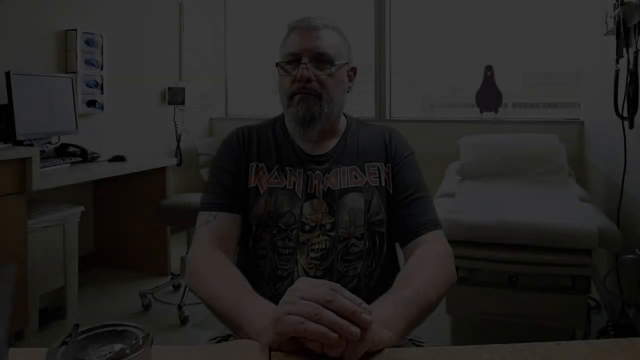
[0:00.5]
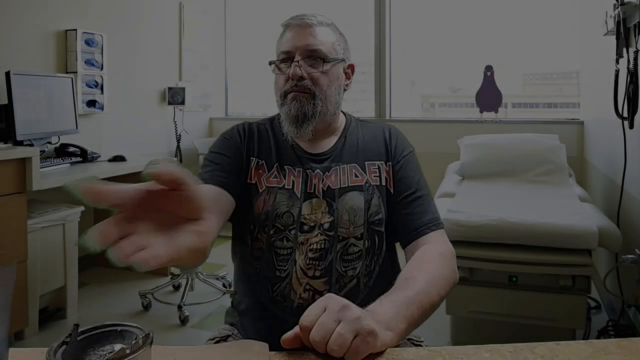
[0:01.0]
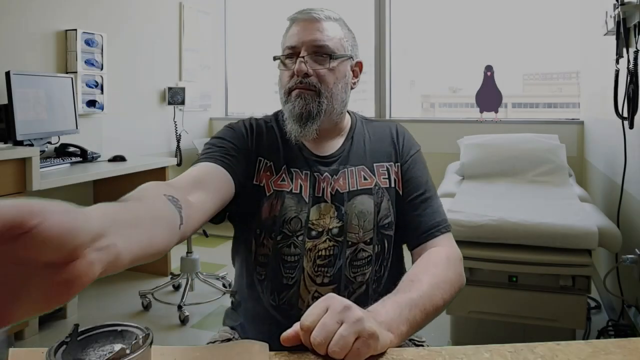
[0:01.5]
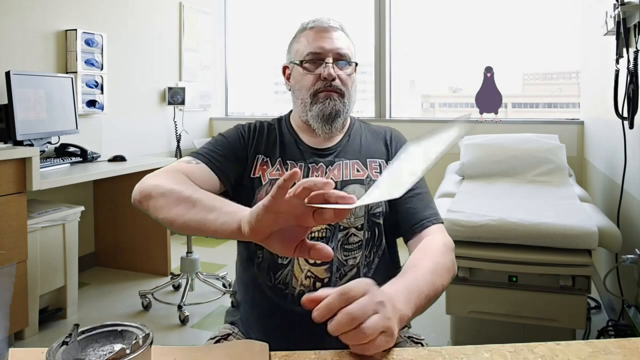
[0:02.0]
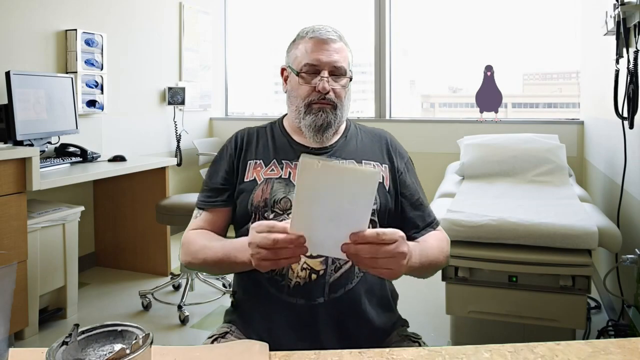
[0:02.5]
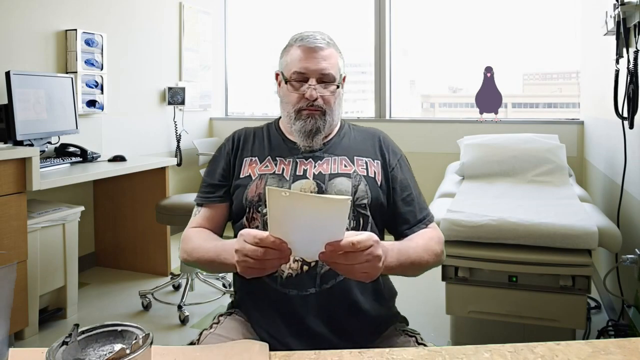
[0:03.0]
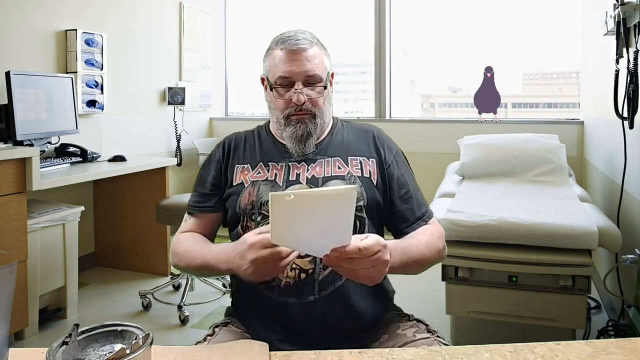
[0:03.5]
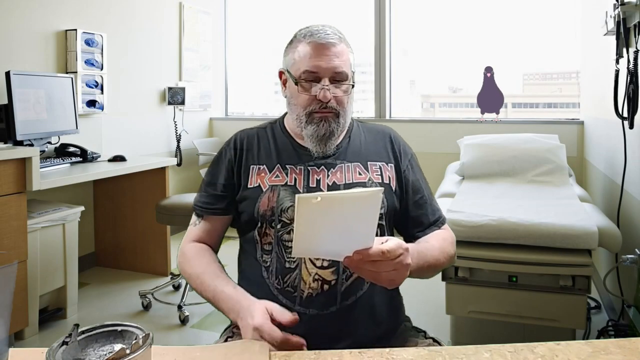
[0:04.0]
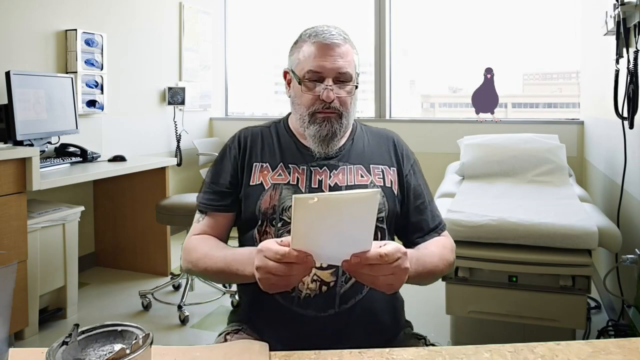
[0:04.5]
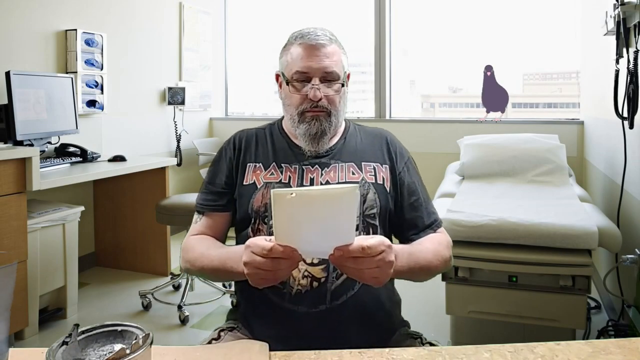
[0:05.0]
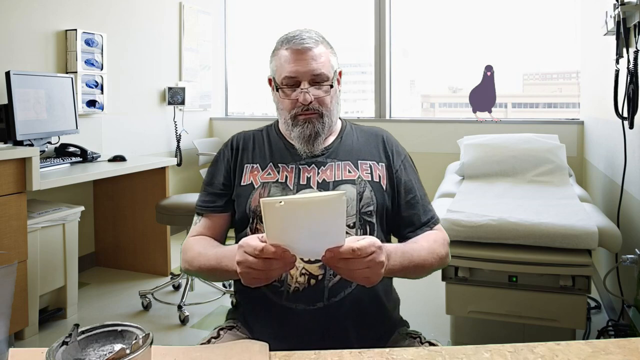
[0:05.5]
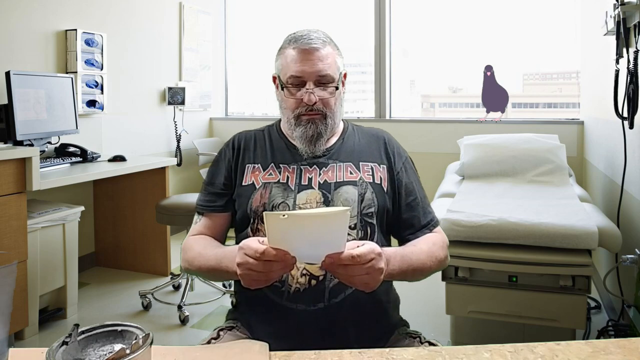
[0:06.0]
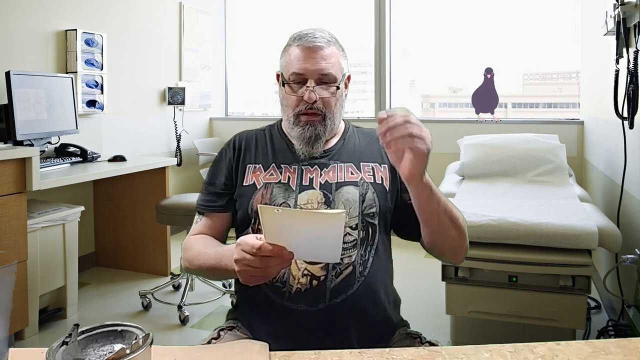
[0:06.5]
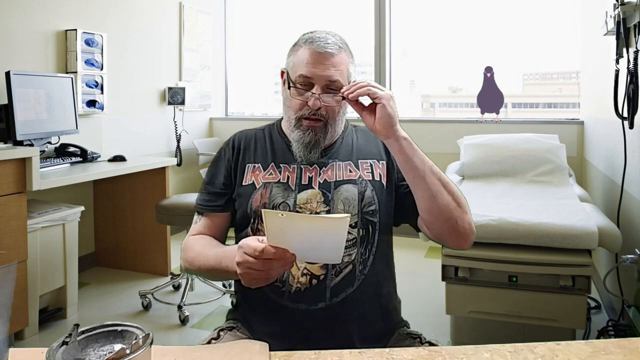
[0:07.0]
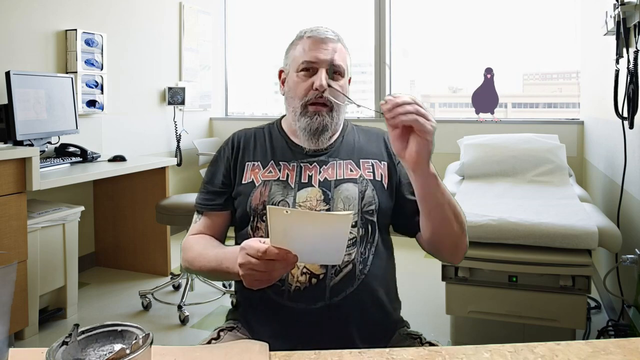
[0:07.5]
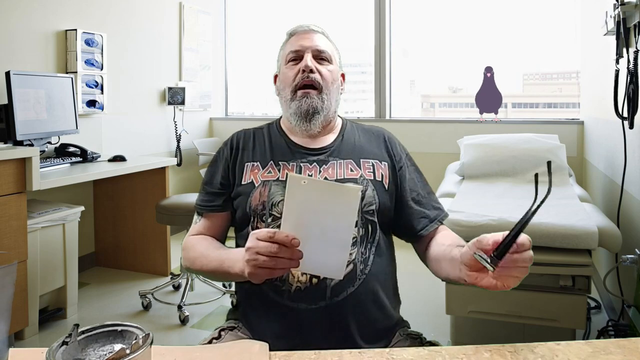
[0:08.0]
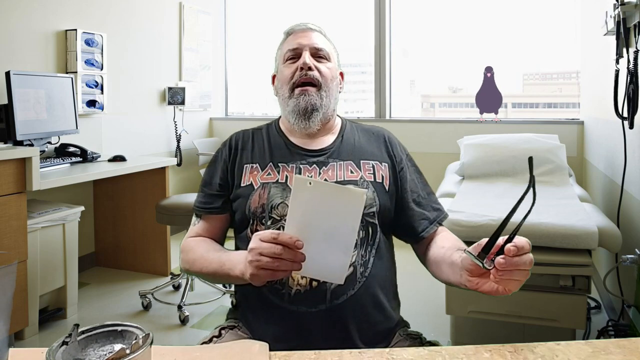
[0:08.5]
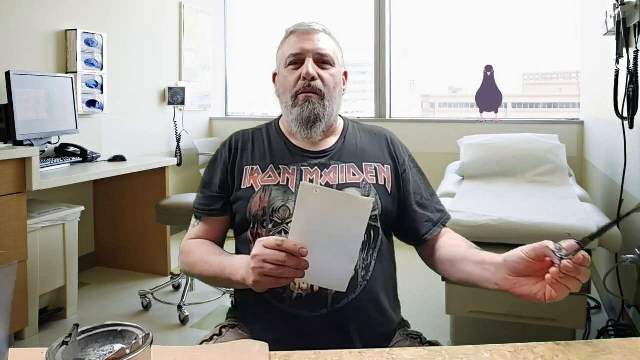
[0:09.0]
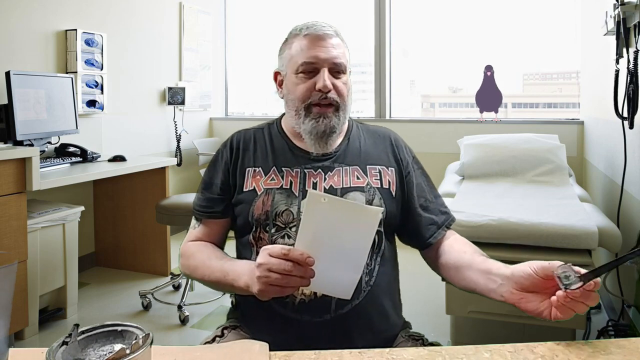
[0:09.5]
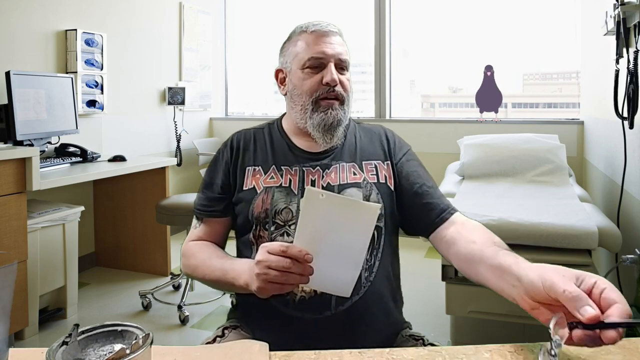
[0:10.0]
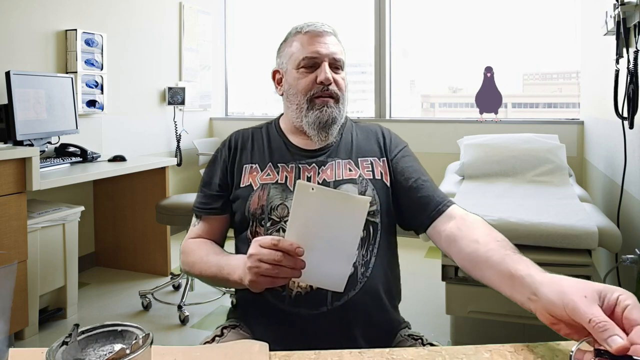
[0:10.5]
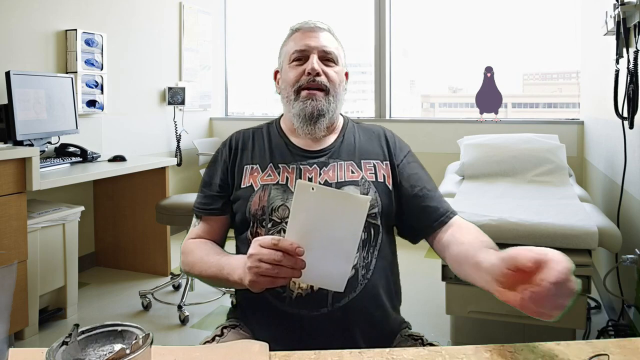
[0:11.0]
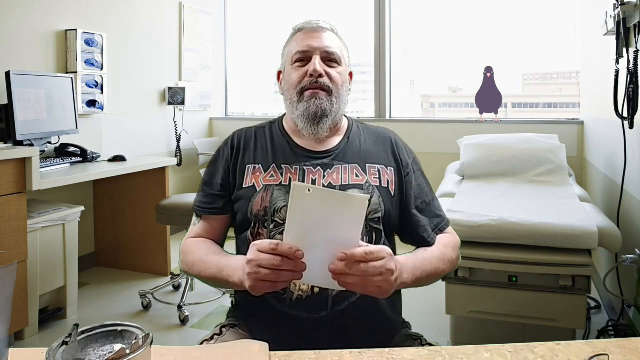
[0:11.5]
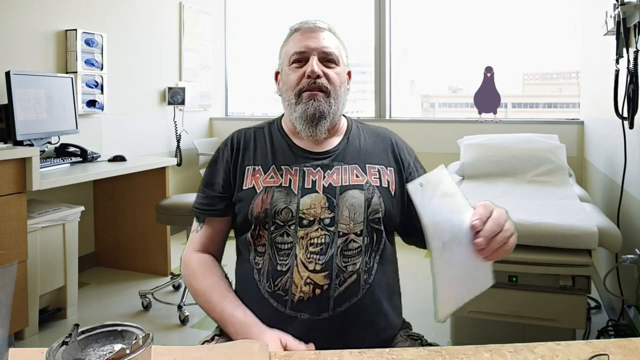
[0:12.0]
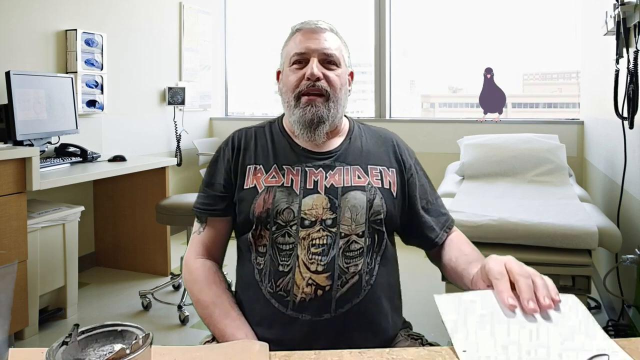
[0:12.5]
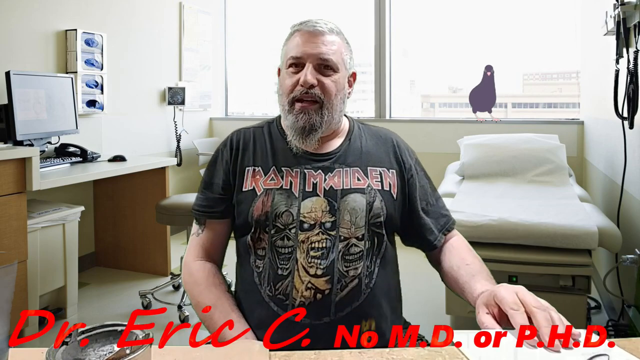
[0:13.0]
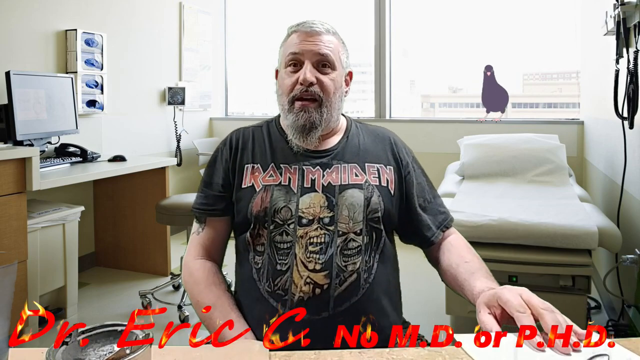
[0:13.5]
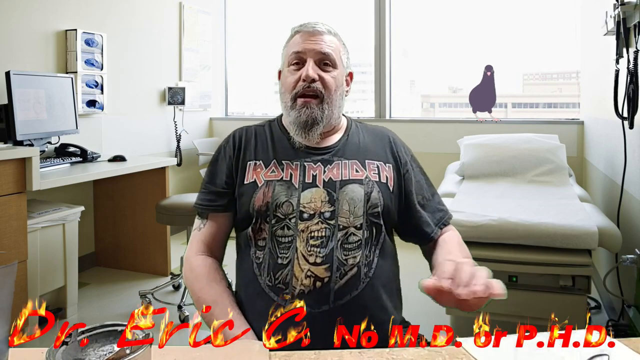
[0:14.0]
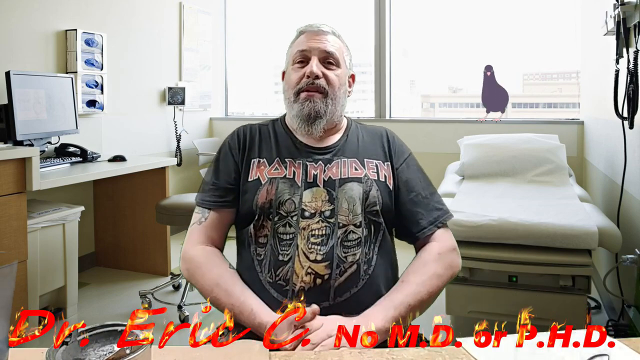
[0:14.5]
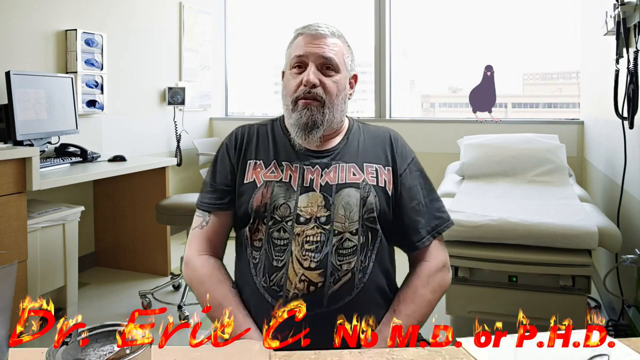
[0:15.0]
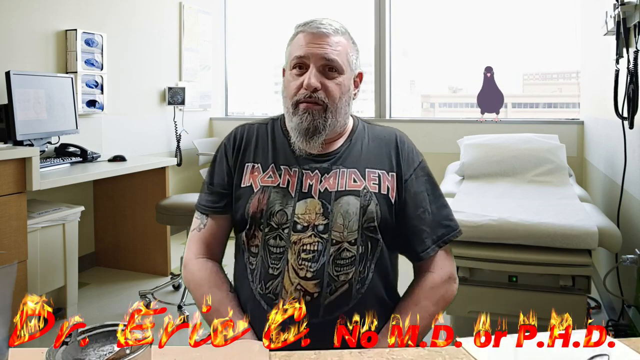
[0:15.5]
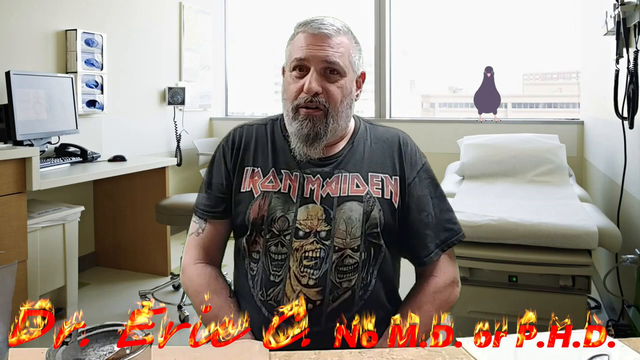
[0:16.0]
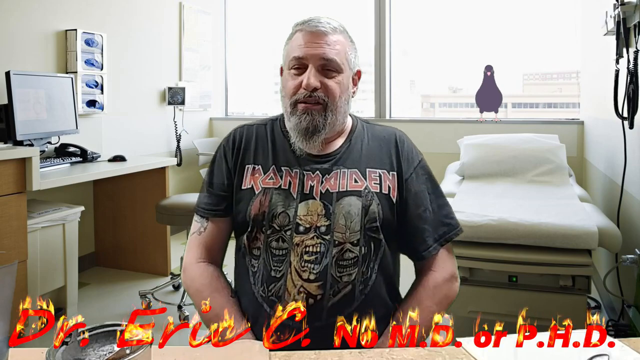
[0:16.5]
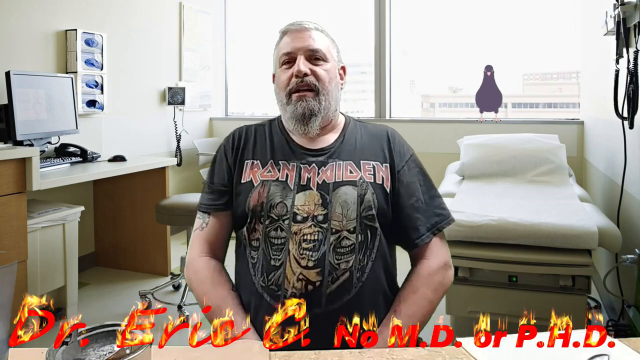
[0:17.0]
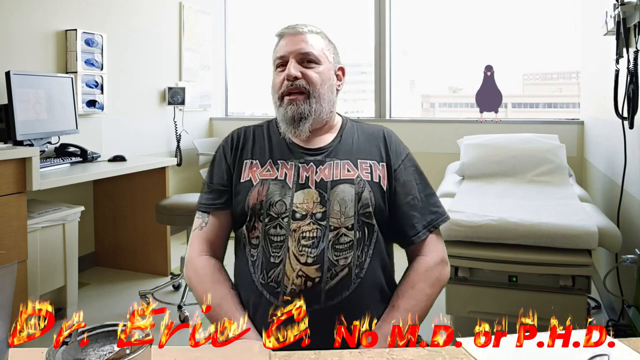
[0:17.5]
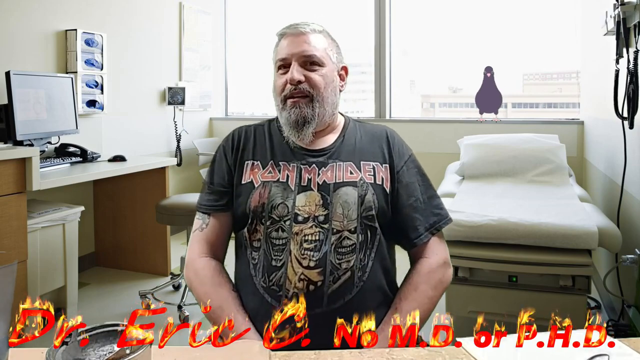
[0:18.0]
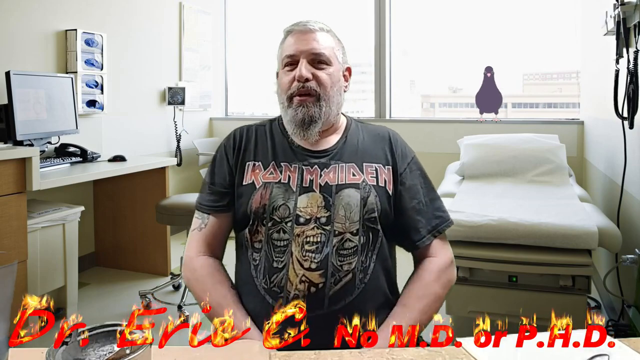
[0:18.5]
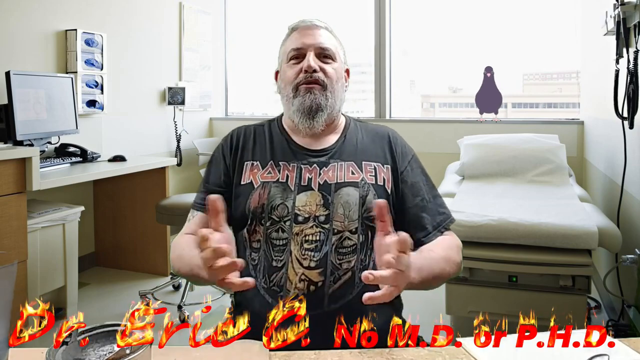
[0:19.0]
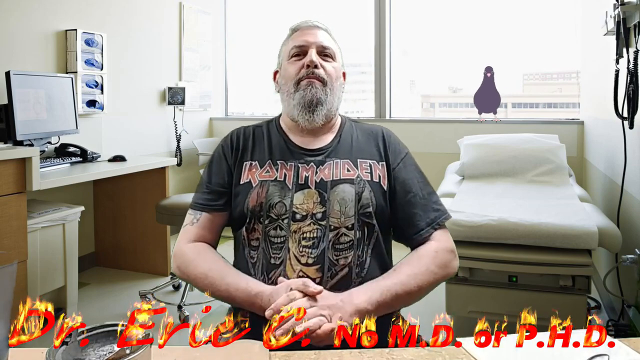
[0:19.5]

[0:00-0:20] A man in an Iron Maiden t-shirt with a pair of glasses takes his glasses off. An animated crow dances in the window behind him. On-screen text gives his name as "Dr. Eric C., no MD or PhD", and the name is on fire in the animation. Behind him are a computer on a desk, a phone, exam gloves on the wall, an examination table, and a chair on rollers. The walls are painted an eggshell white. Examination tools hang on the wall by the examination table on the right-hand side of the picture, and another examination tool is on the left wall. A garbage can is in the shot. Two windows at the back of the room behind him seem to be lit with natural light. He seems to be fairly high up in a building; possibly the top floor or roof of another building is visible through the window. The sky looks gray or hazy. He talks into the camera.